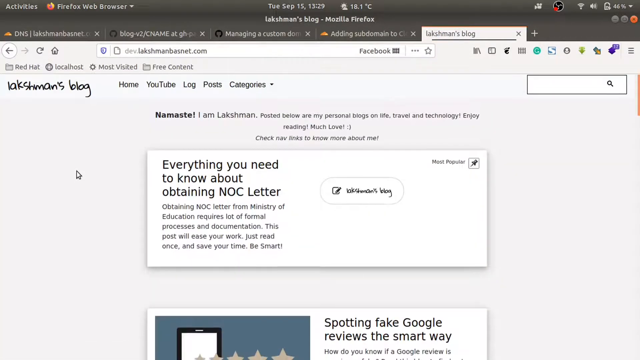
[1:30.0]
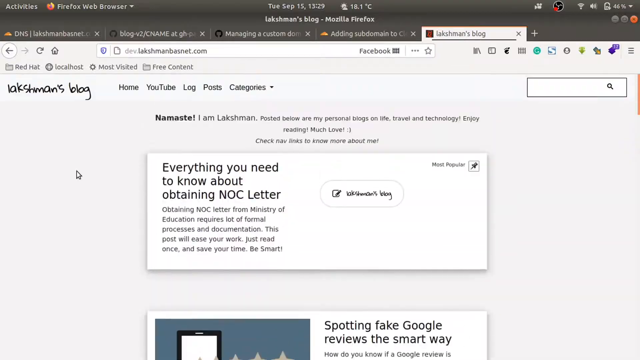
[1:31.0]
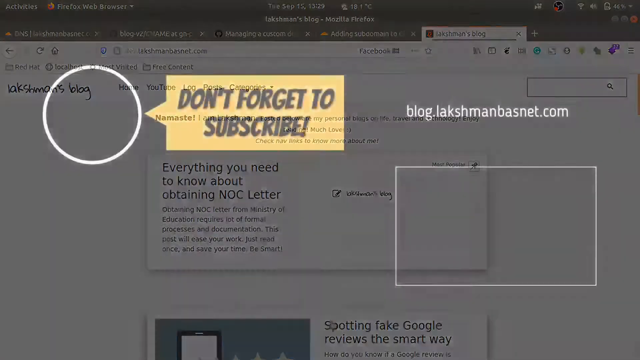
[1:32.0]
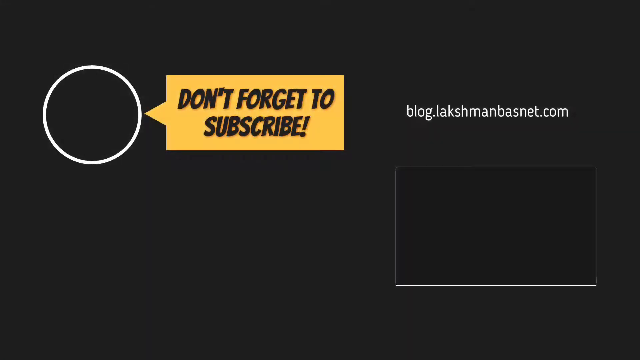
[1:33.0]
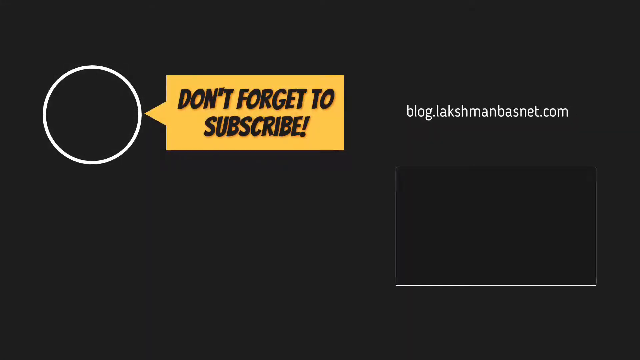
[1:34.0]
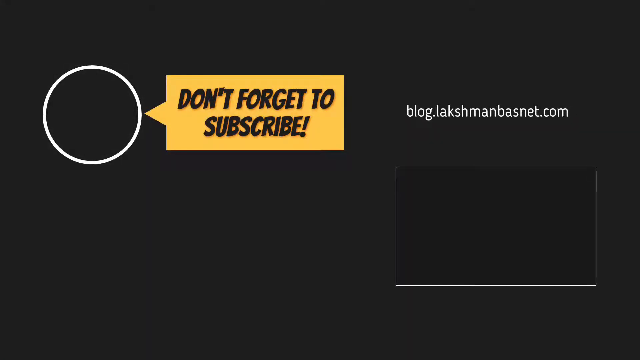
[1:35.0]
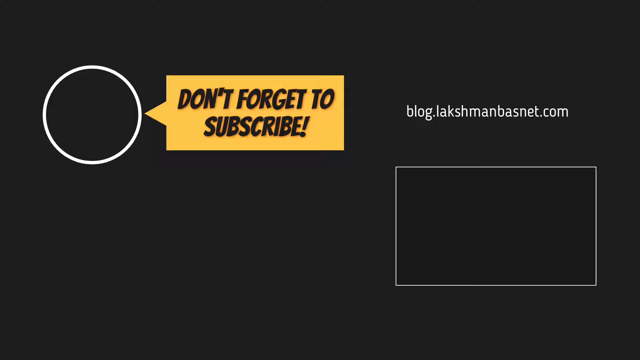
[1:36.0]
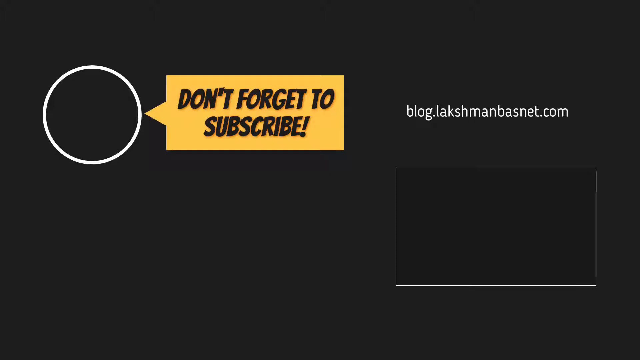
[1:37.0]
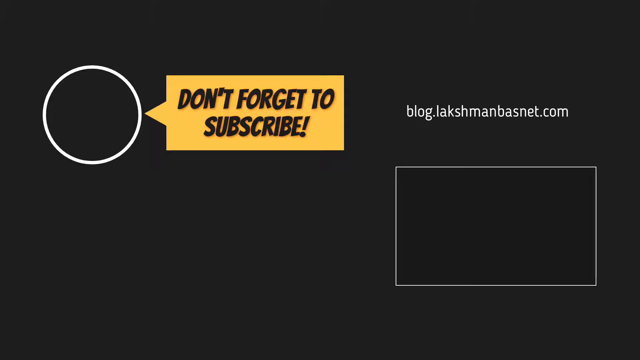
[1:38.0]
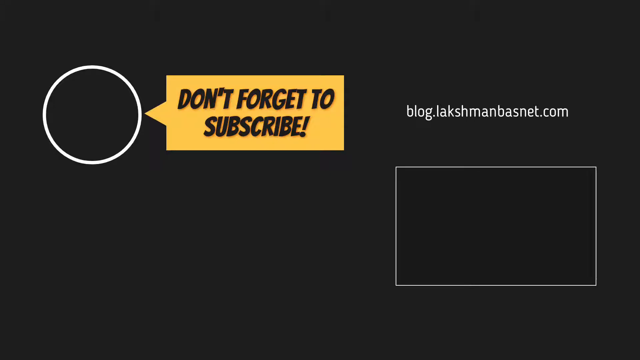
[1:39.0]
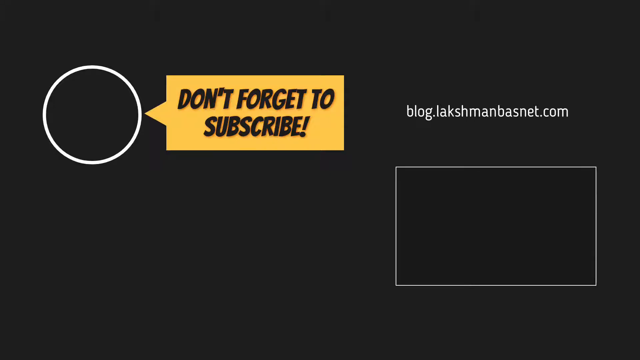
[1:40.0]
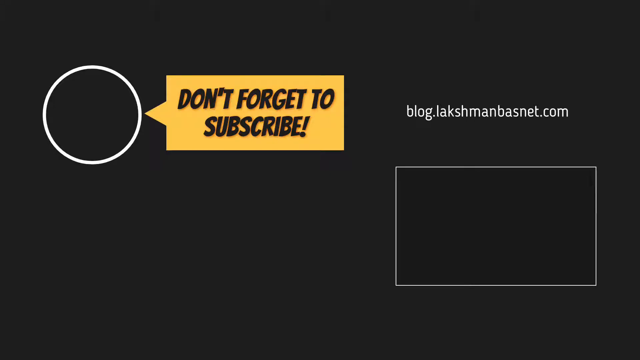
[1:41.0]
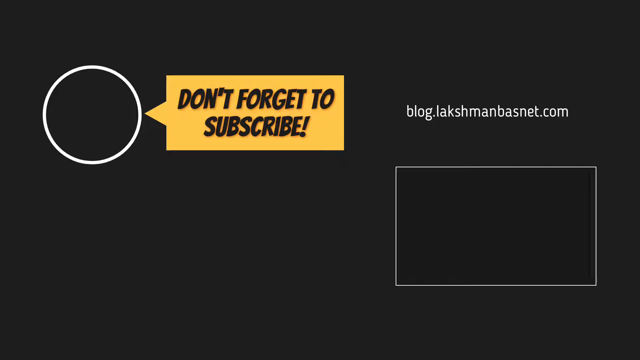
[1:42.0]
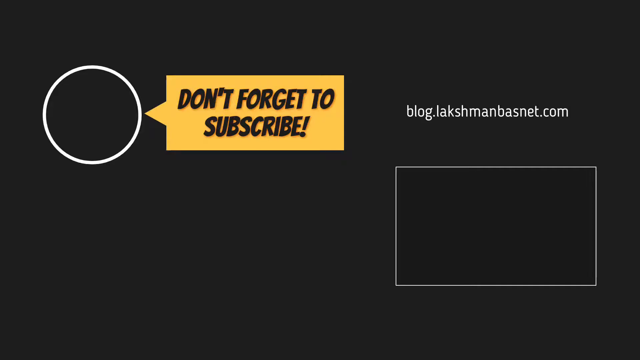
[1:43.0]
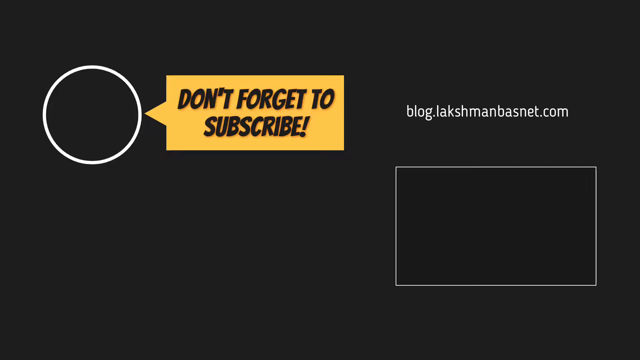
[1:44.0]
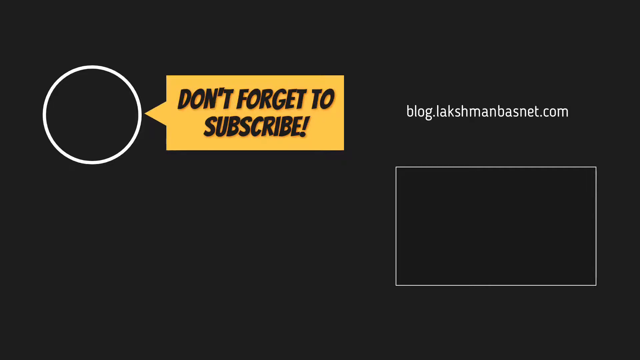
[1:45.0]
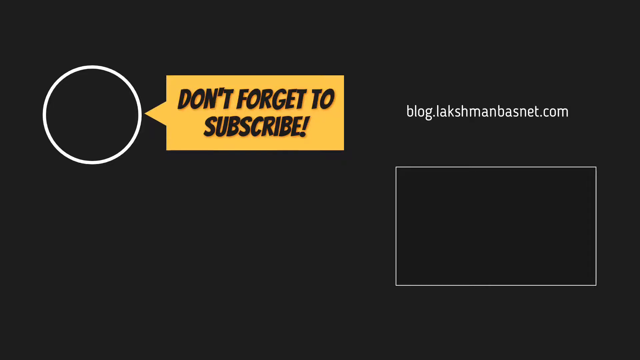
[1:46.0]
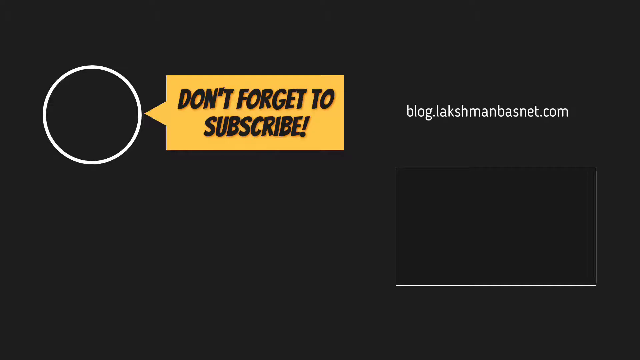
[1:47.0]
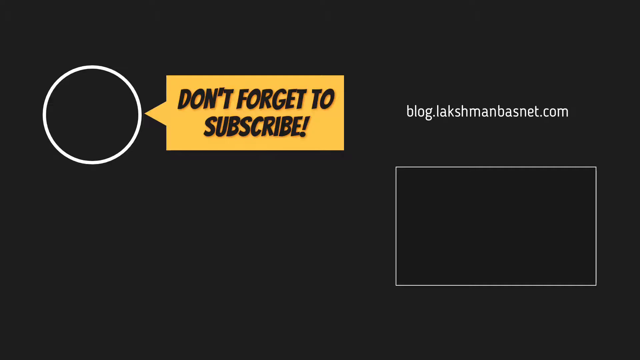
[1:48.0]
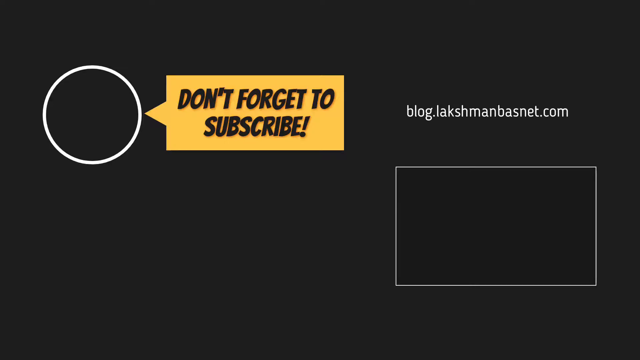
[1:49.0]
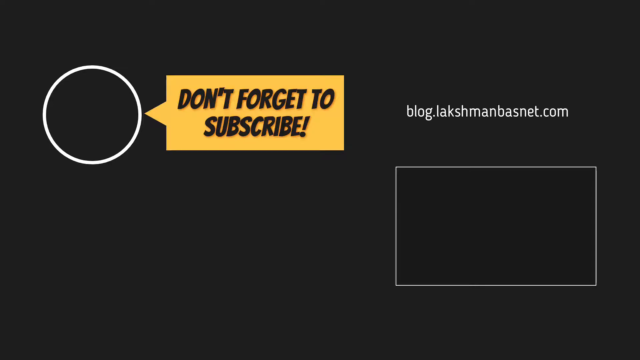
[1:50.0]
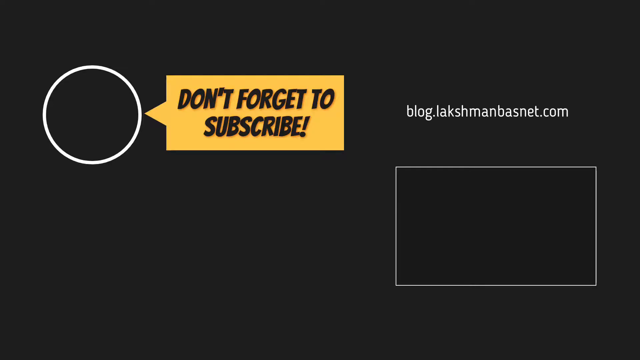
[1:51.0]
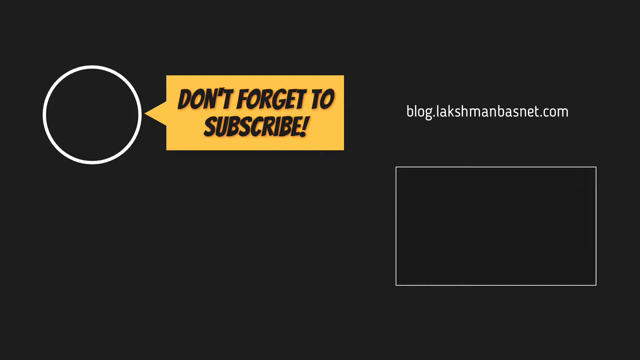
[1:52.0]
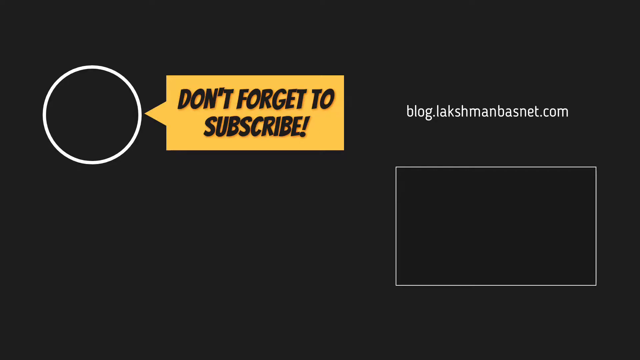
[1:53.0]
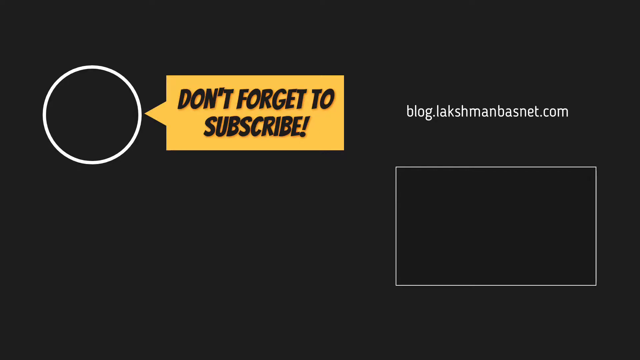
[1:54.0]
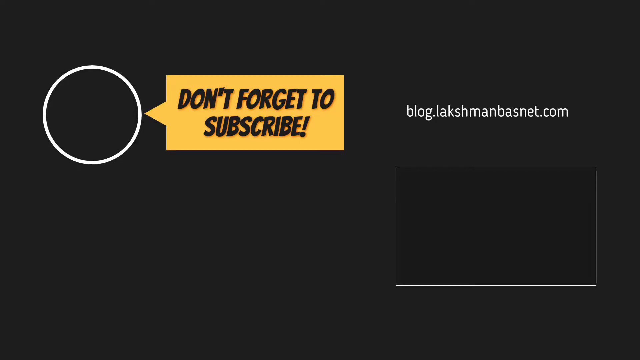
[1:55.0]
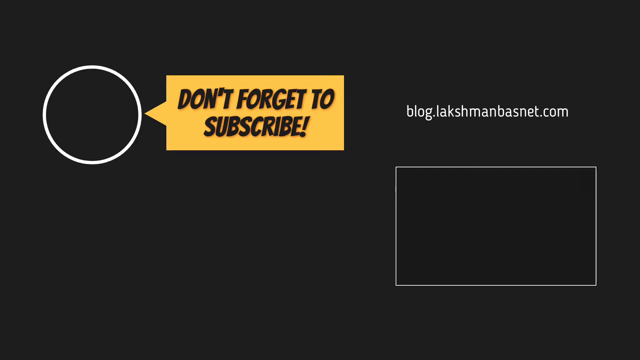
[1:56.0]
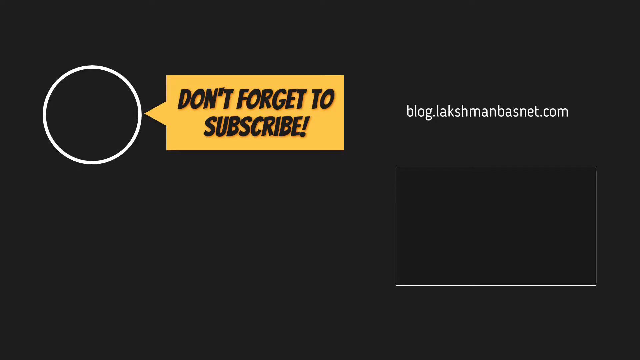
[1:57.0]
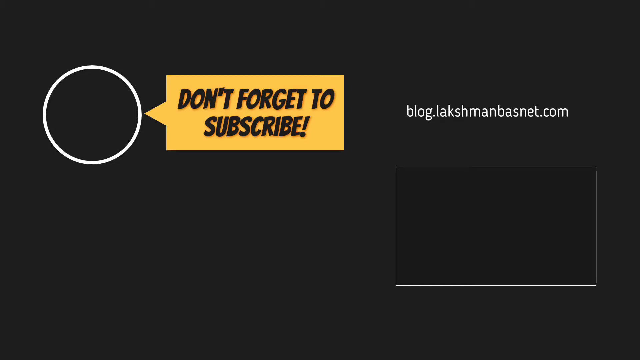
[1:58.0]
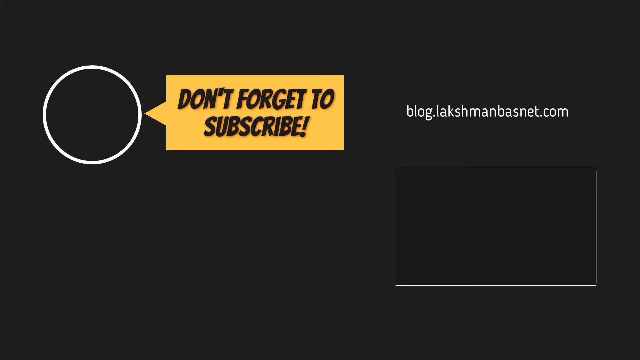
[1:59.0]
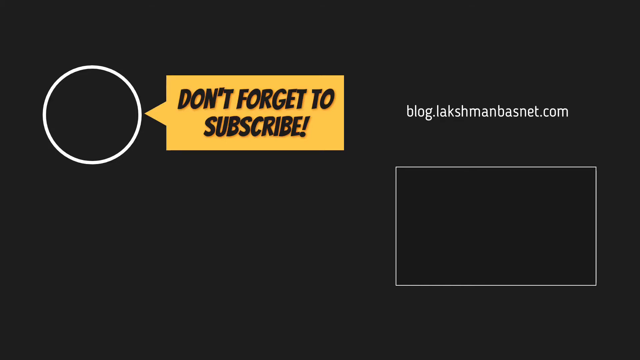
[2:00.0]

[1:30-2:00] The Lakshma blog is open, with the options home, YouTube, blog and post categories. A welcoming text reads "Namaste, I am Lakshma. Posted below as my personal blogs, my life, travel and technology. Enjoy your reading. Much love. Please check new links to know more about me." He is using Firefox with five tabs open and four saved websites; the date shows Tuesday, September 15th, OBS is in use, and the battery is at 46%. After the site is visited, an end screen appears with a space for a video and a sign saying "don't forget to subscribe" on an orange background, linked to a white circle. On the right is "blog.lakshmanbasnet.com".